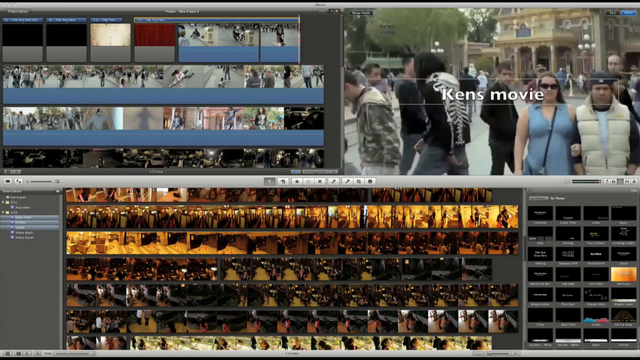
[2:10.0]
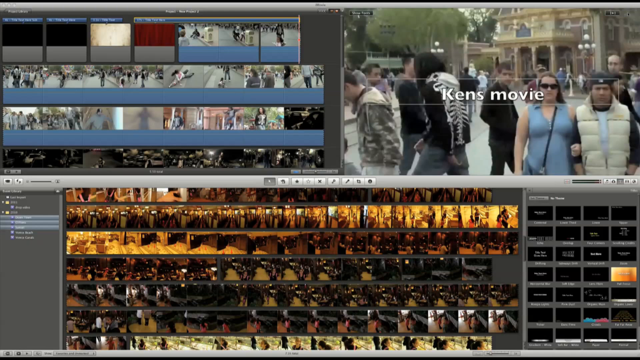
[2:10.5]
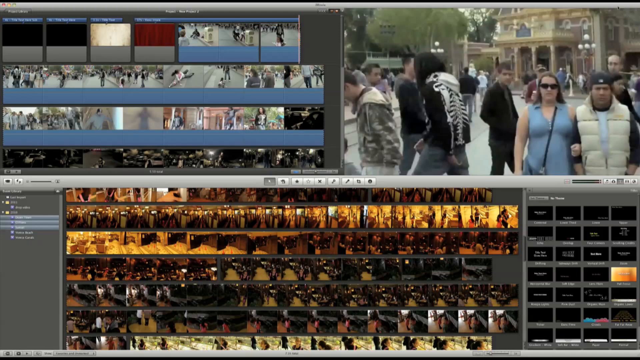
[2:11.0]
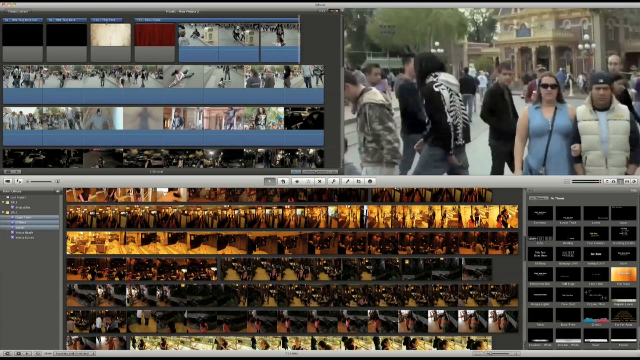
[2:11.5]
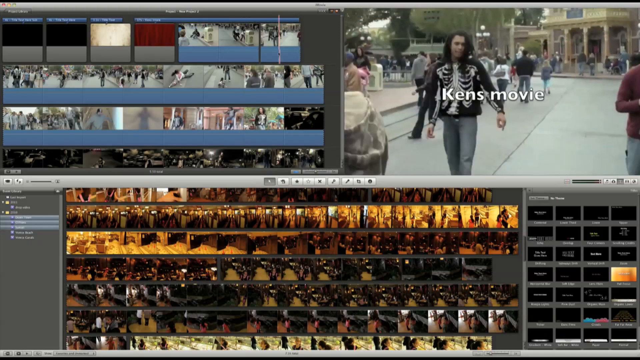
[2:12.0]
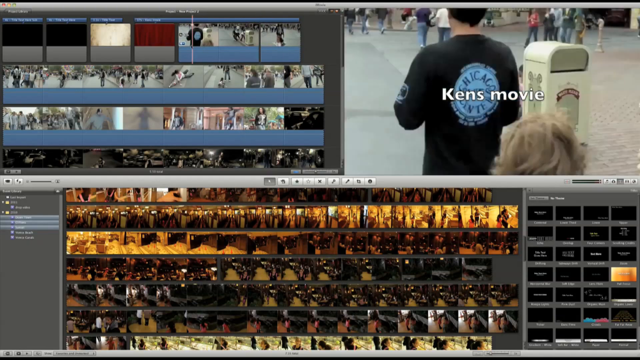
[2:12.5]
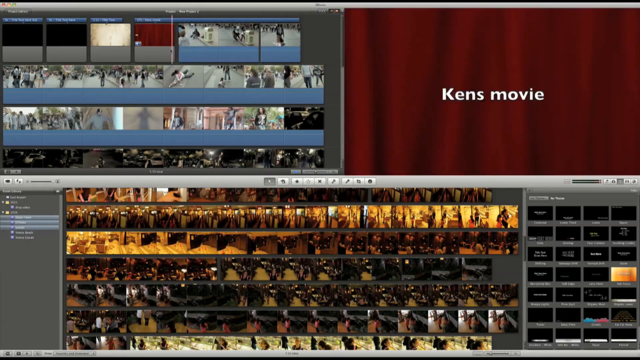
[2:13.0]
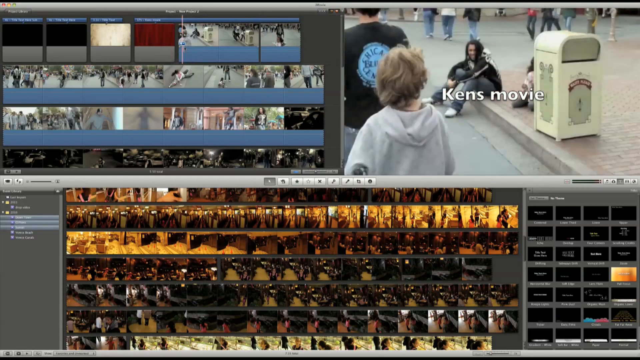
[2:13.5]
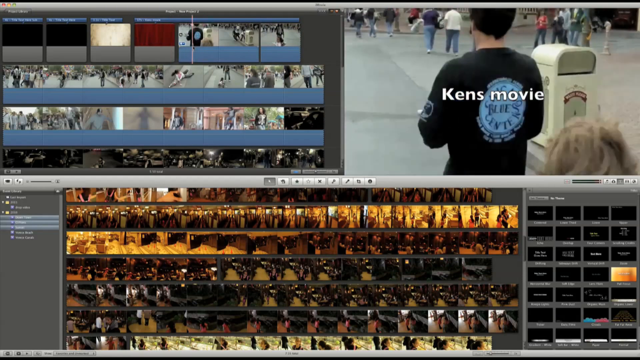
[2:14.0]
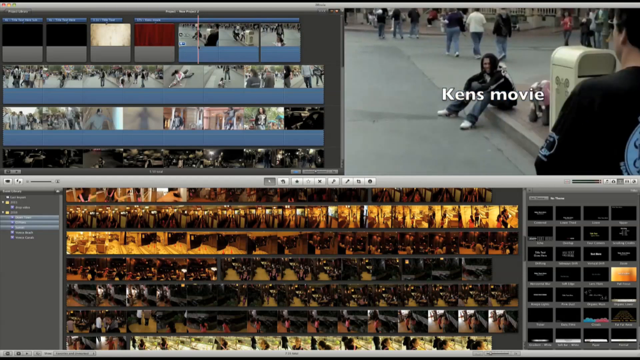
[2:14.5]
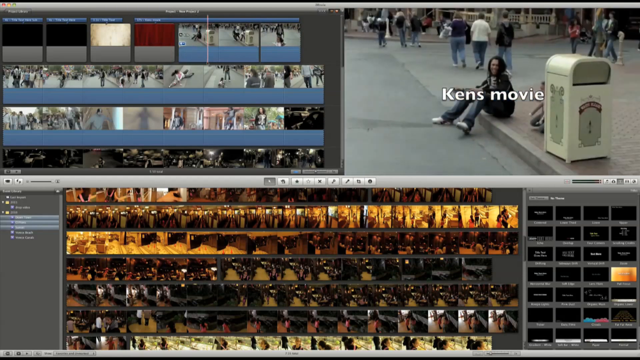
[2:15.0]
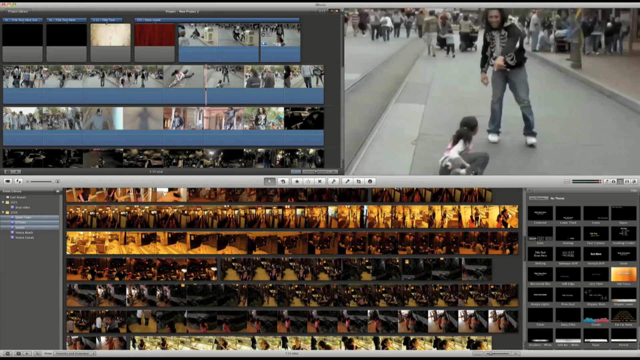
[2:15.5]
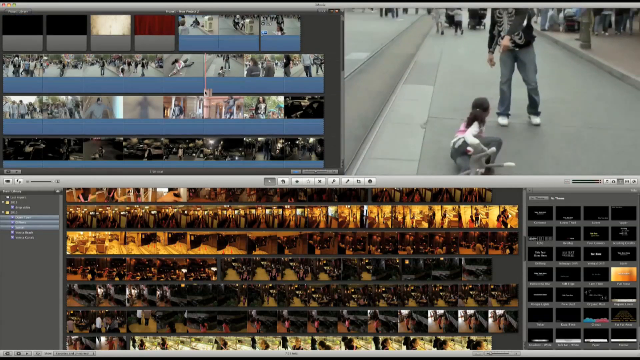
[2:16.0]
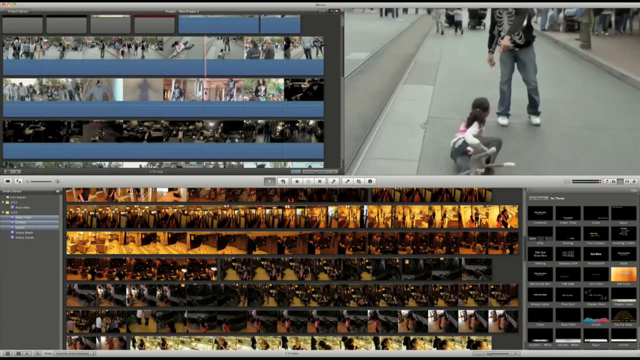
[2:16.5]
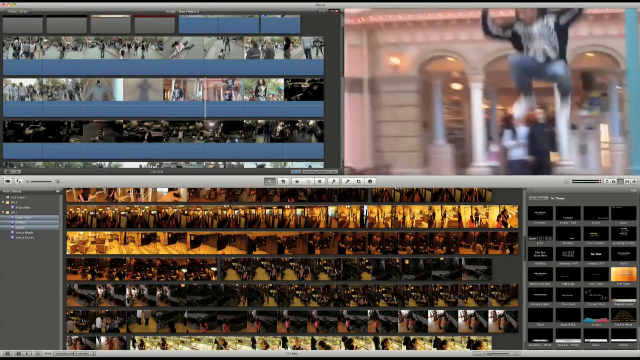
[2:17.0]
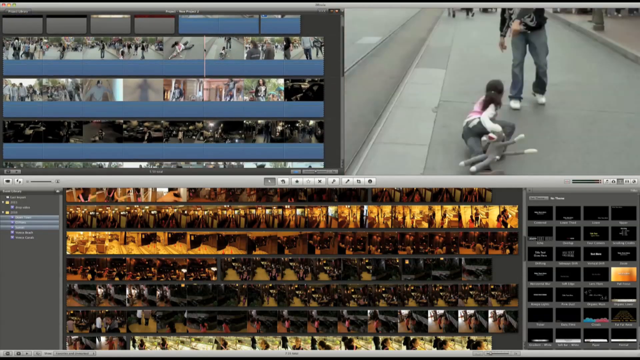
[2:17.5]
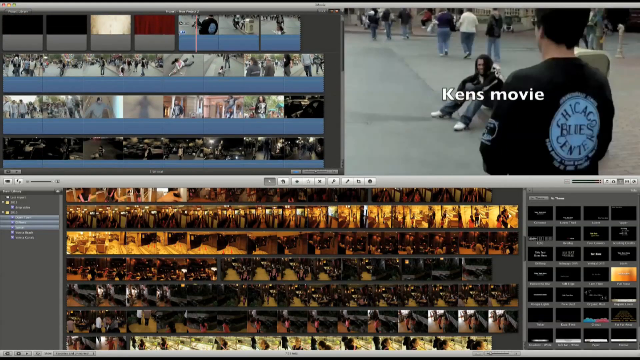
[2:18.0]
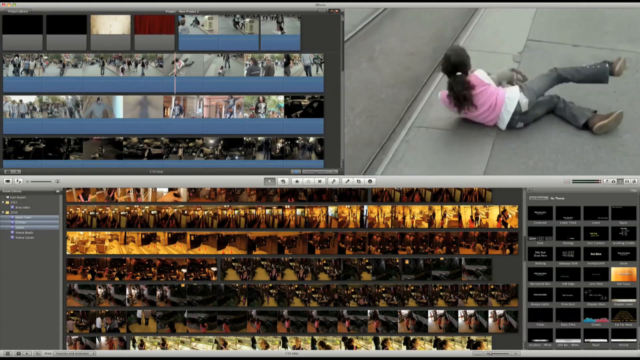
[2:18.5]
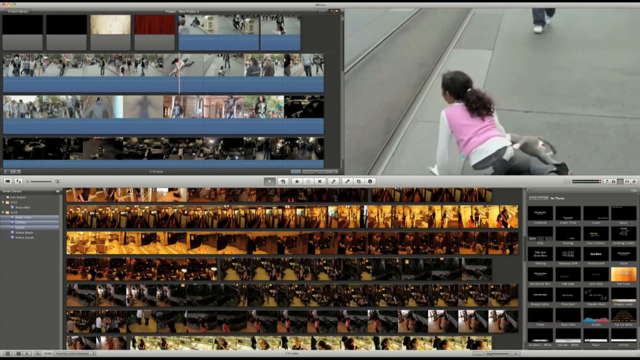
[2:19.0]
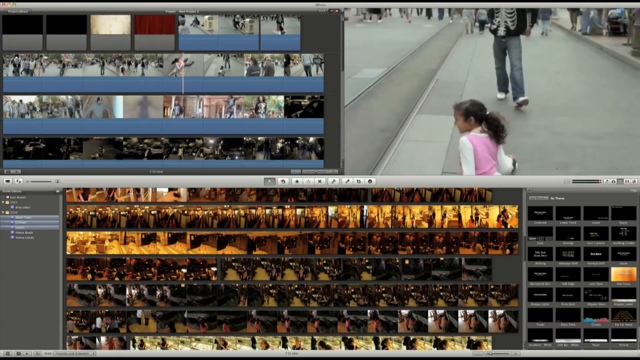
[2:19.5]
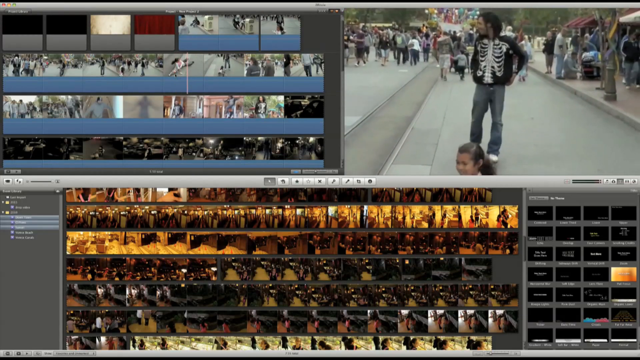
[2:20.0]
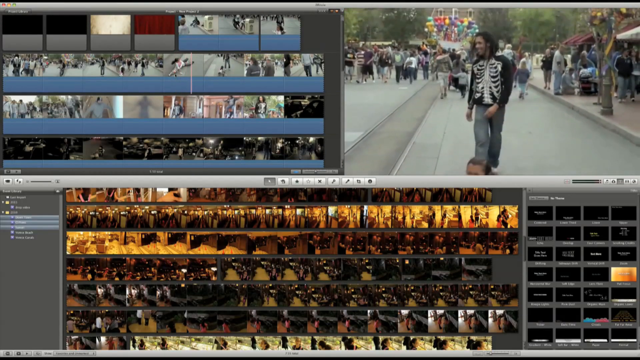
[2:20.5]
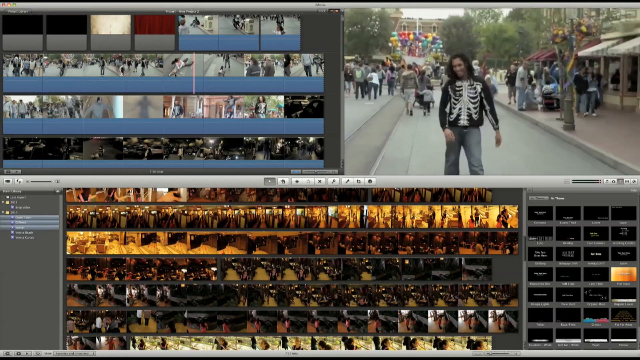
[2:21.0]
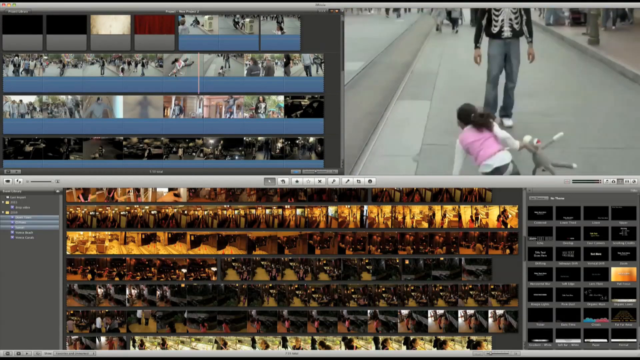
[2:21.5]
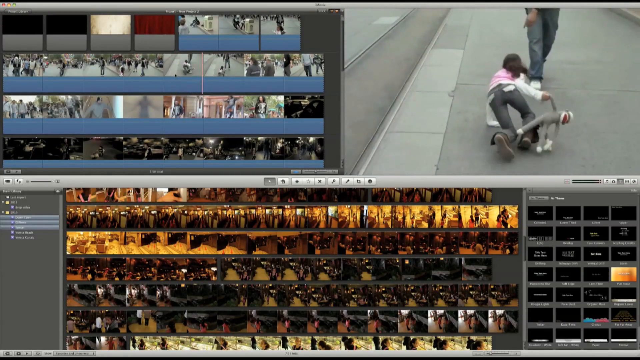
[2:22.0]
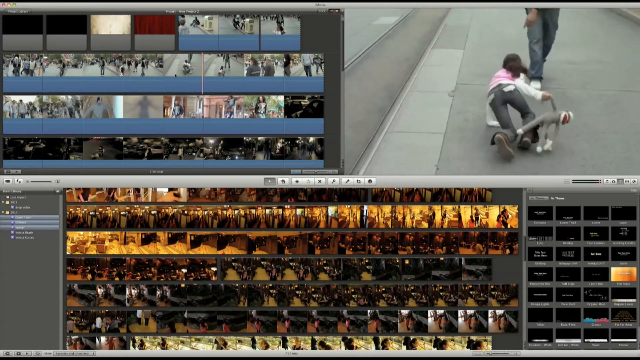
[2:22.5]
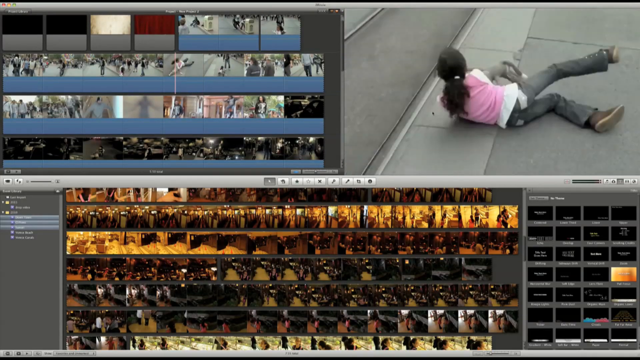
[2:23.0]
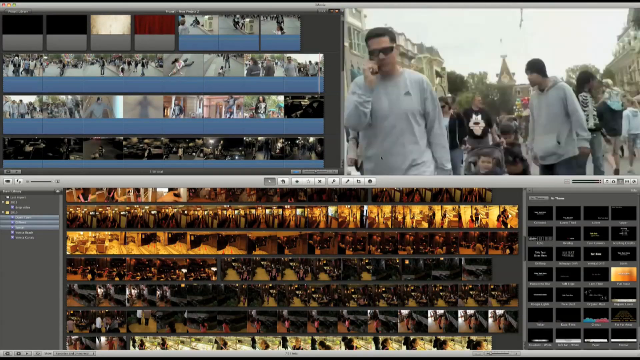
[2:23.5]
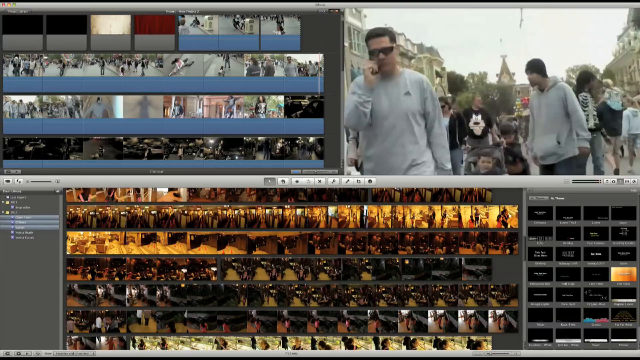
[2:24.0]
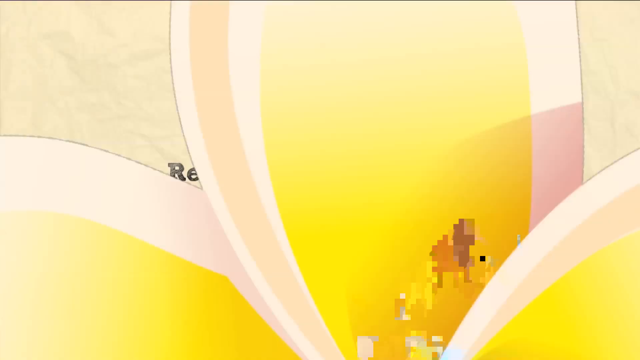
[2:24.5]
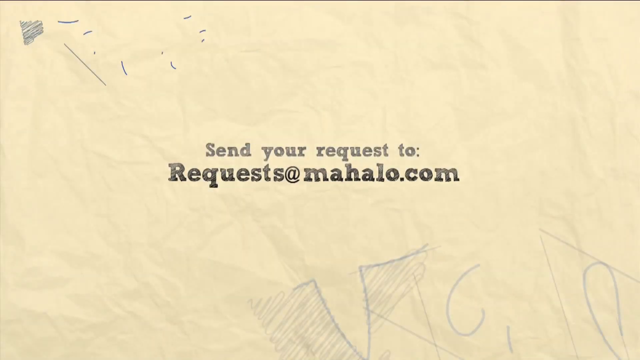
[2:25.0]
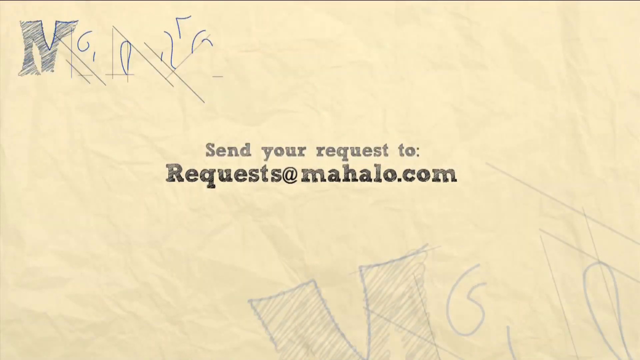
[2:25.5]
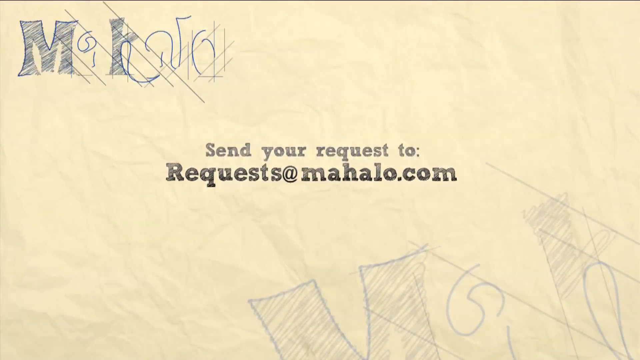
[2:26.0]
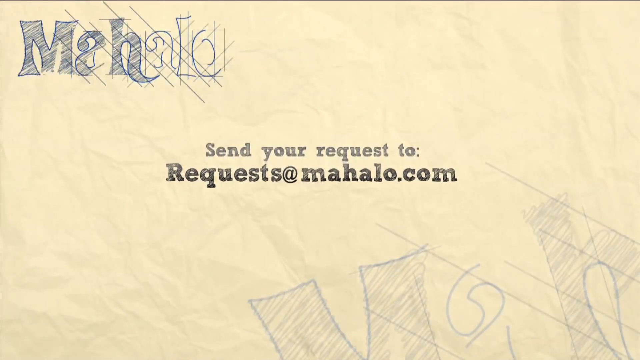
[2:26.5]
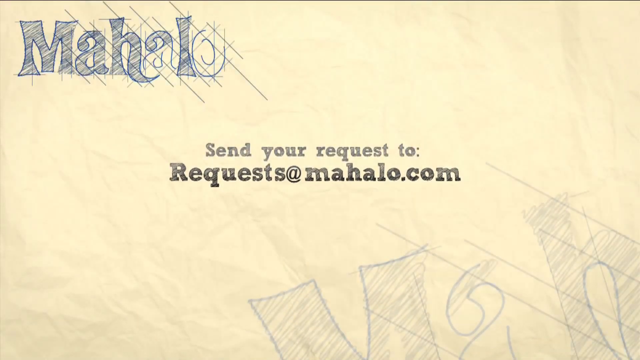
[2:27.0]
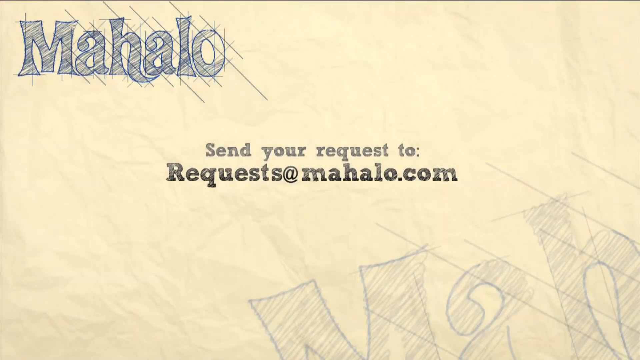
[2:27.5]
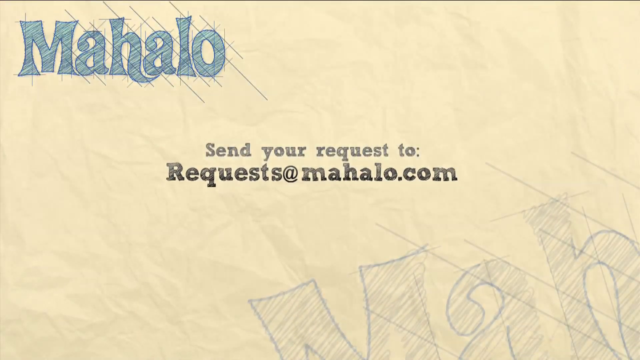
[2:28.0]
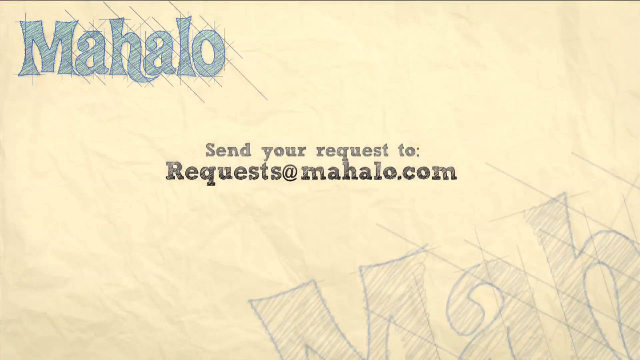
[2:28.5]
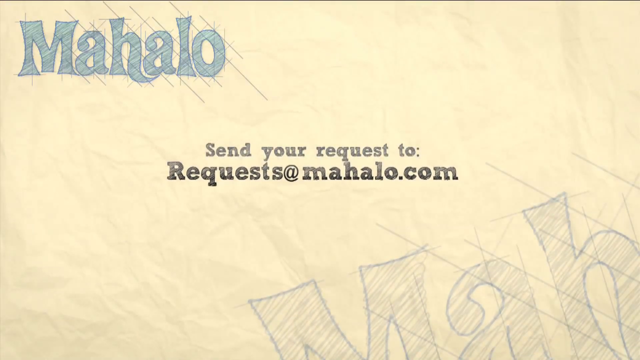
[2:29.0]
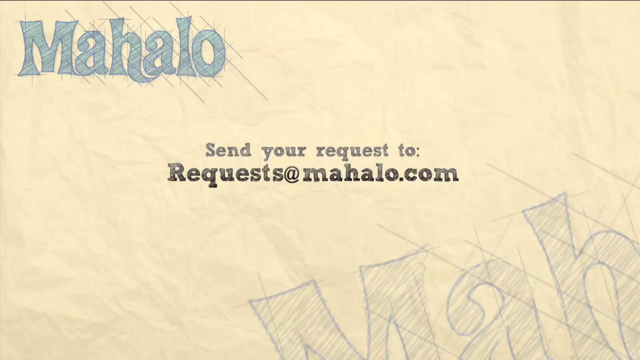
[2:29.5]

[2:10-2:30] The effect can be dragged across the whole video or a portion of it. In the footage of the teenagers playing, the child falls down onto the ground near a paved staircase. She carries a brown stuffed monkey with white hands, legs and mouth, and wears a pink T-shirt with white sleeves and grey trousers. She gets up; she has long brown hair down her back. The older teenager appears to be Ken, wearing the same clothes and the same dreadlocks as Ken. Buildings are in the background, including a yellow building with three cylindrical pillars supporting a shade, and street lights with five bulbs each.